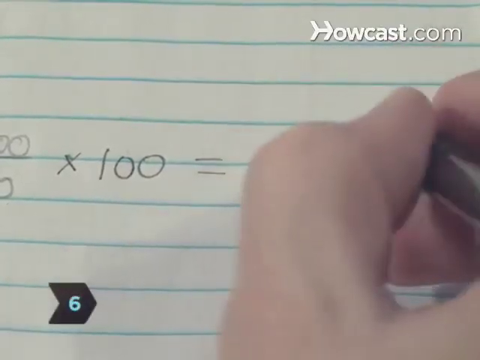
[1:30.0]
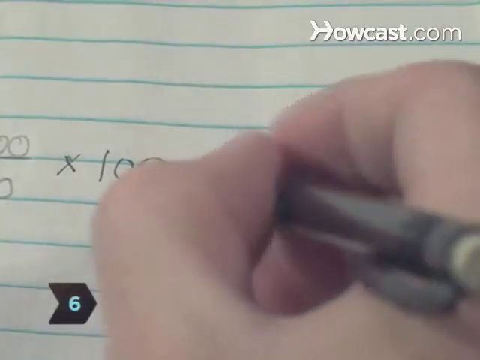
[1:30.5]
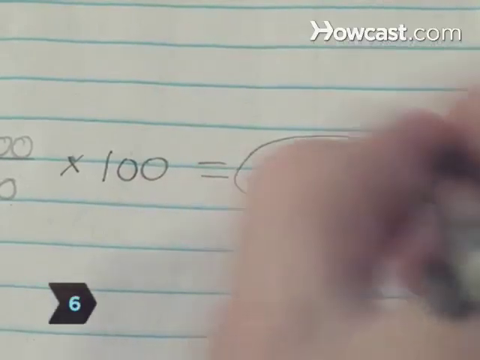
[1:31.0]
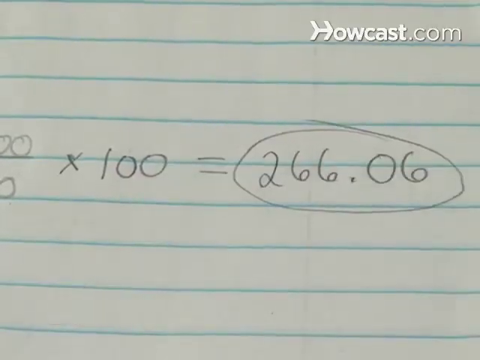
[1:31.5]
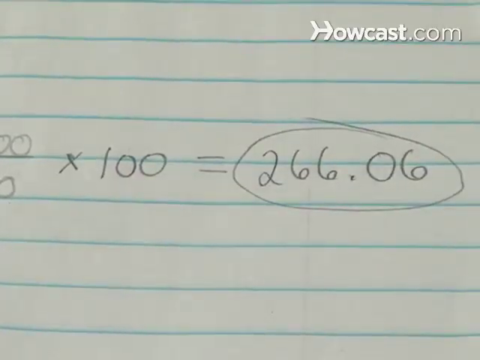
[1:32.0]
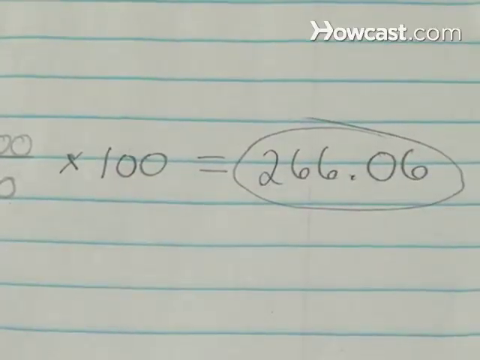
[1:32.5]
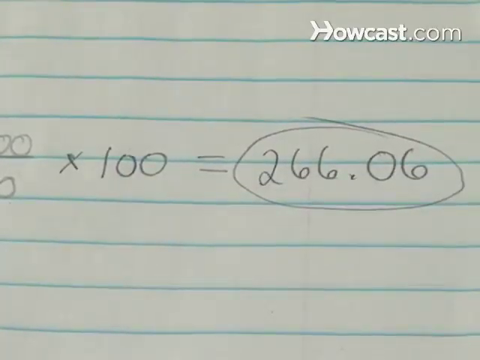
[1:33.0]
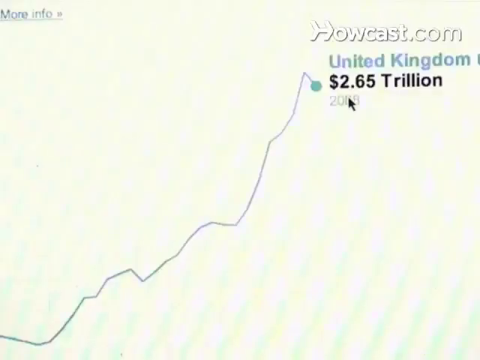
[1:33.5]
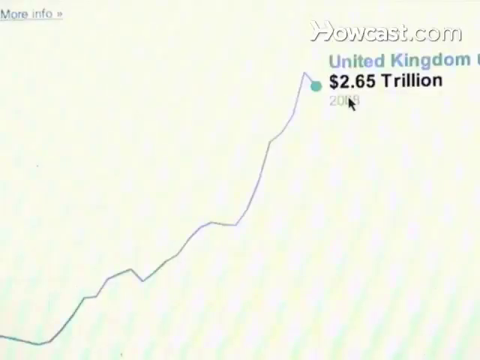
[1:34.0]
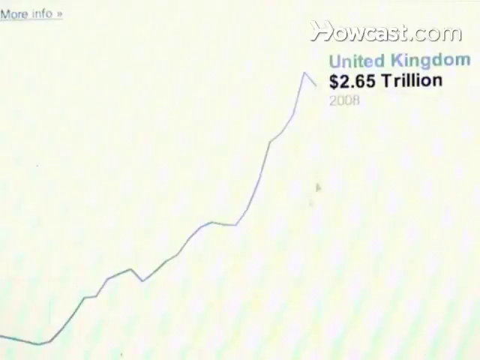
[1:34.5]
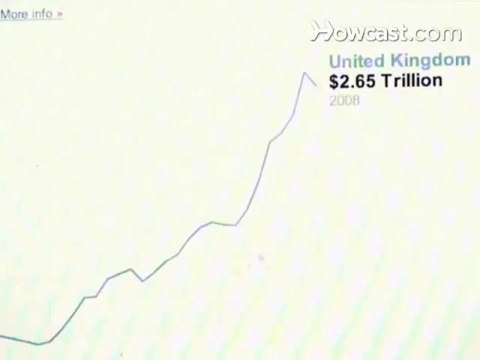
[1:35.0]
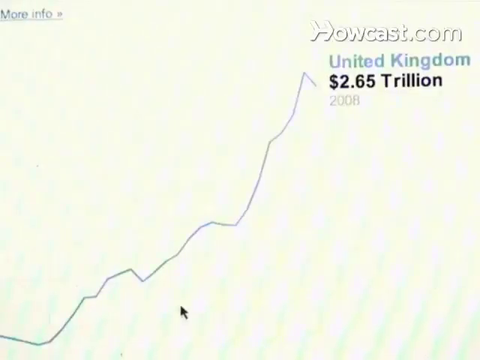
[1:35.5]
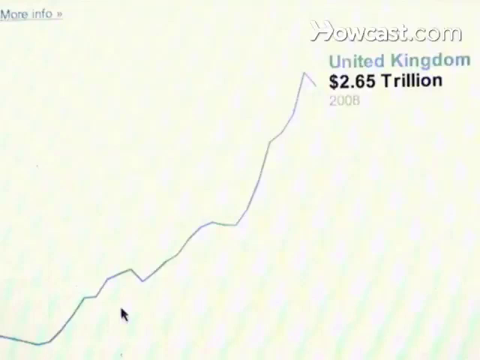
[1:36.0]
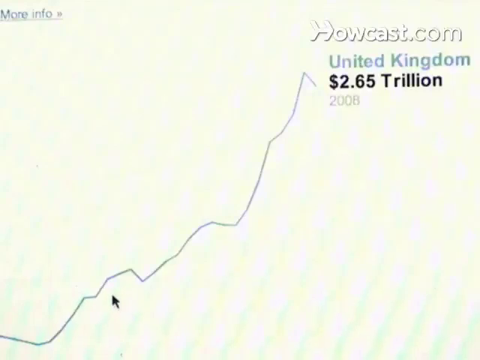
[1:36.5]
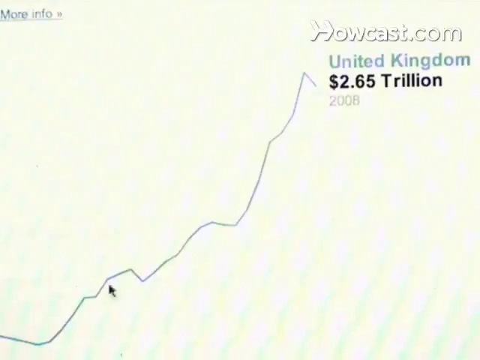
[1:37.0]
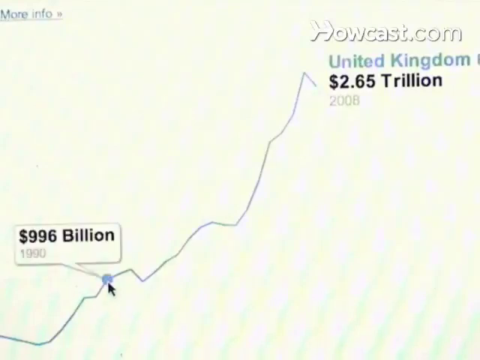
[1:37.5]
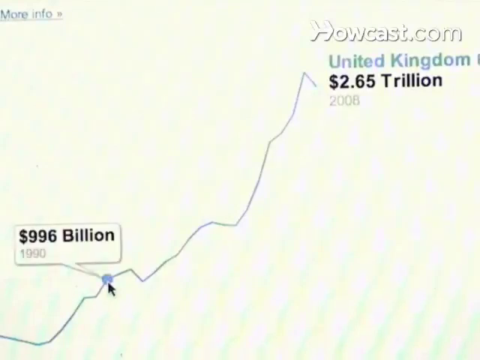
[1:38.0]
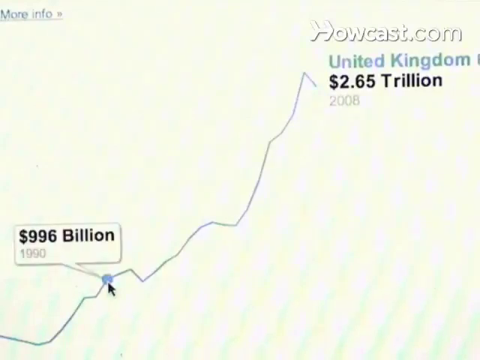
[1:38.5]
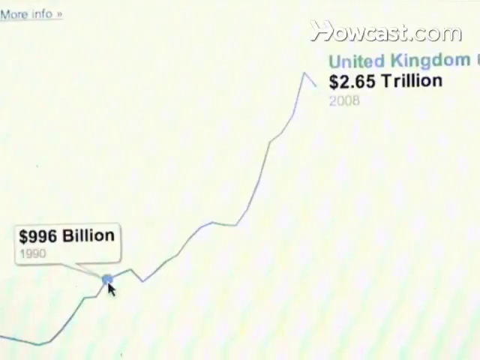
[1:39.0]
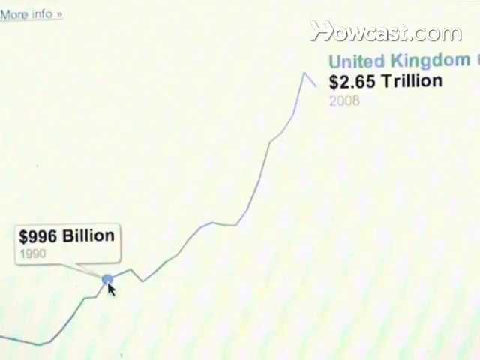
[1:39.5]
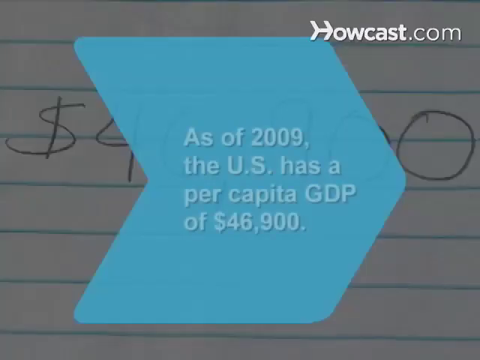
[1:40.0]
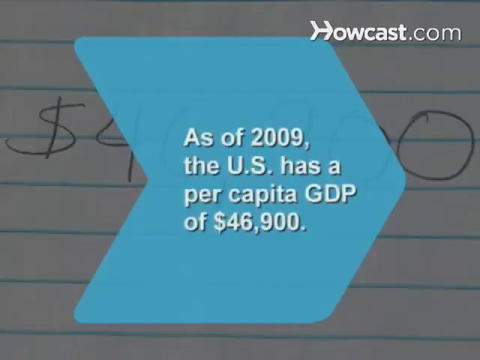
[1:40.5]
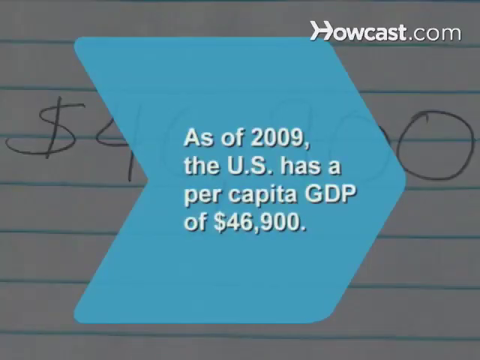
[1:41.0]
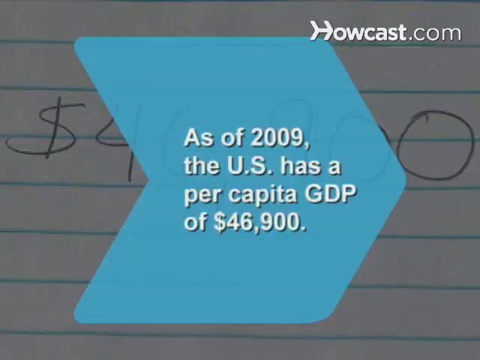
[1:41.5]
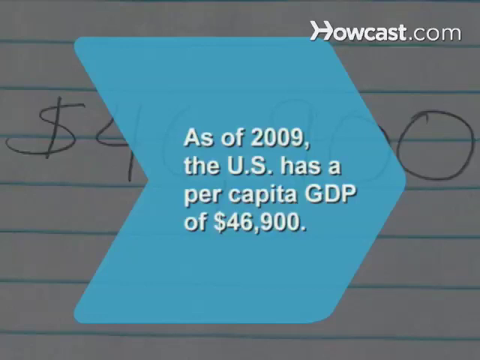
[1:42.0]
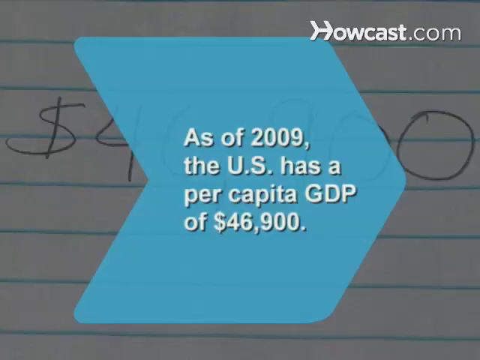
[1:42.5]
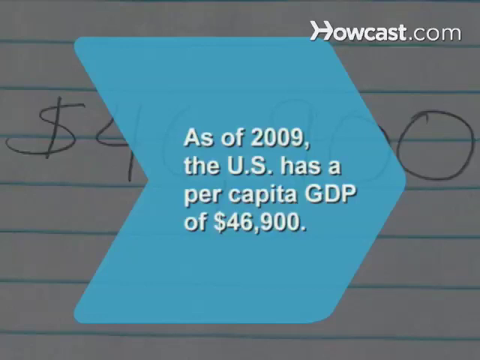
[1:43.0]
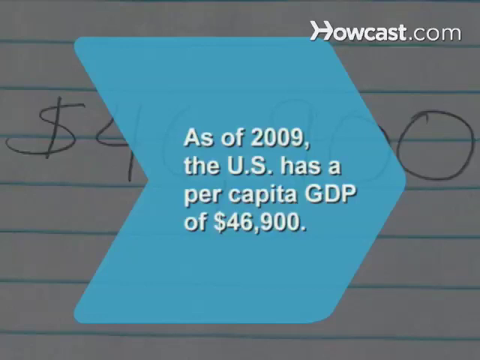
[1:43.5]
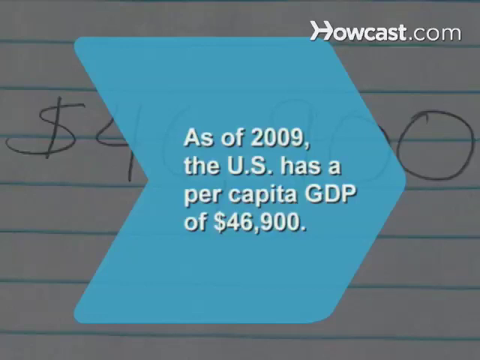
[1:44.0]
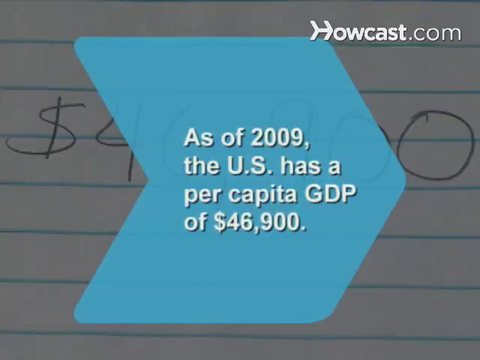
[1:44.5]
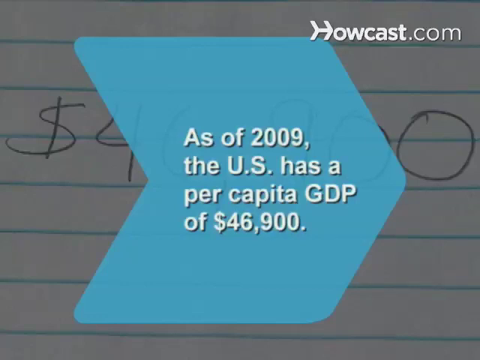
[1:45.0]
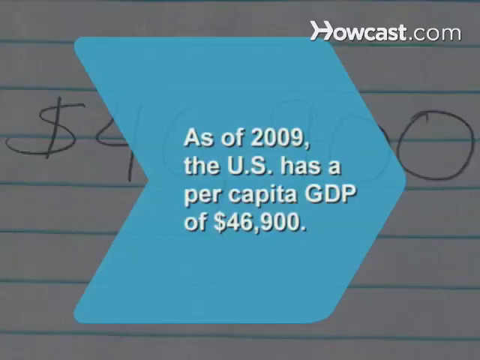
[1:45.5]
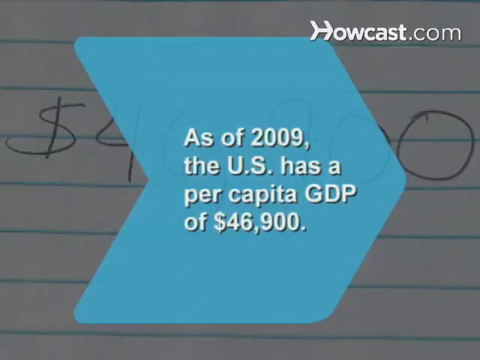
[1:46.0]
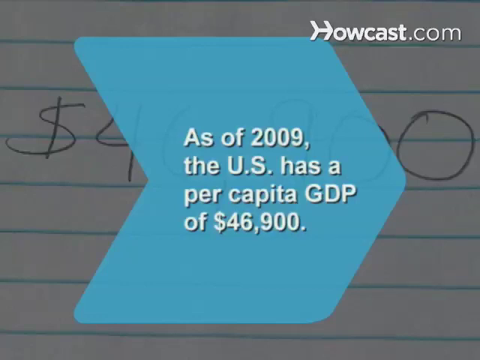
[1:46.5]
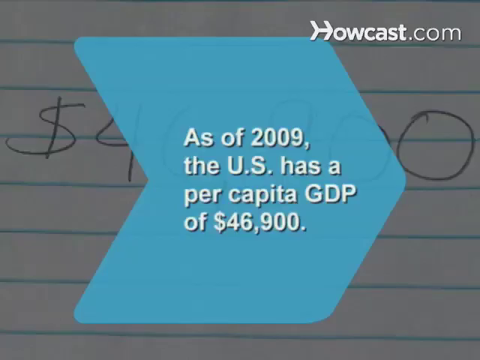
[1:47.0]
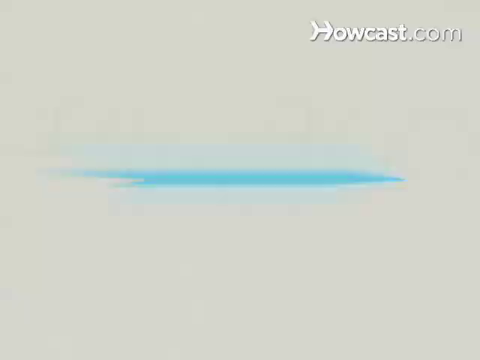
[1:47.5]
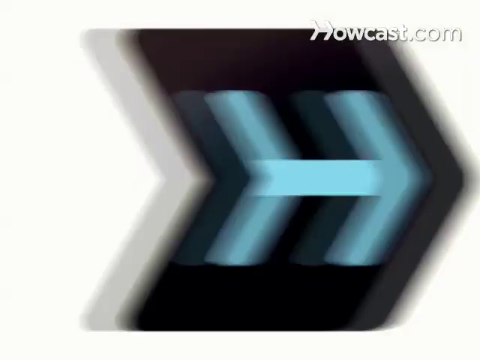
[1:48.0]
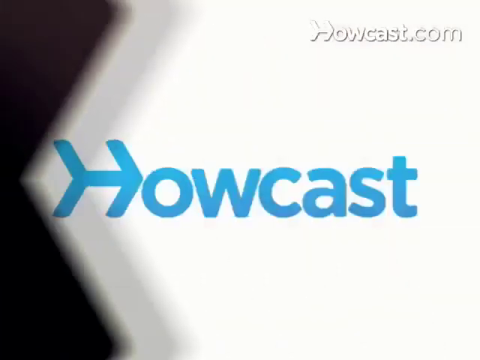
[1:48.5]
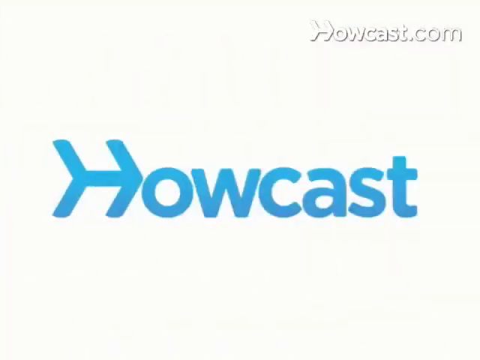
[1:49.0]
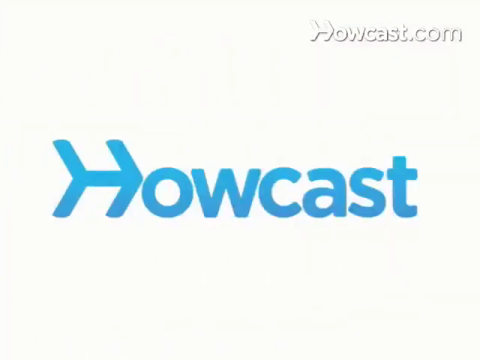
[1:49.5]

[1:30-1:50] The person moves their hand away, revealing the answer they have written to the equation: 266.06. They draw a circle around the answer. The video cuts to the computer screen showing the line graph, with an arrow-shaped cursor hovering on the screen. It taps on the line towards the start of the line, and the same speech bubble appears, reading "996 billion dollars in 1990". The video then cuts to a full-frame graphic whose background is an extreme close-up of the written equation, knocked back visually by a transparent black layer. A large blue arrow on top carries a white caption reading "as of 2009 the US has a per capita GDP of $46,900". This cuts to the logo from the beginning of the video, a large black arrow with a pale blue arrow over it that bears some resemblance to the letter H, which animates to leave behind the word "Howcast".